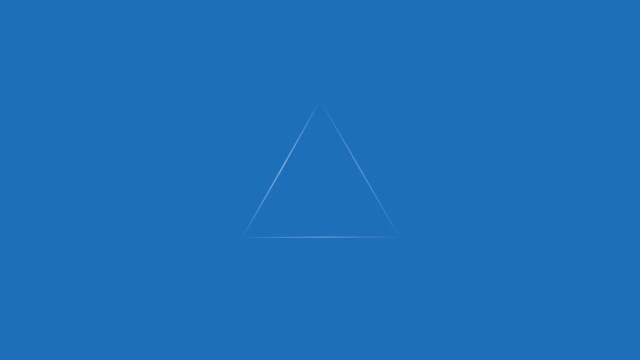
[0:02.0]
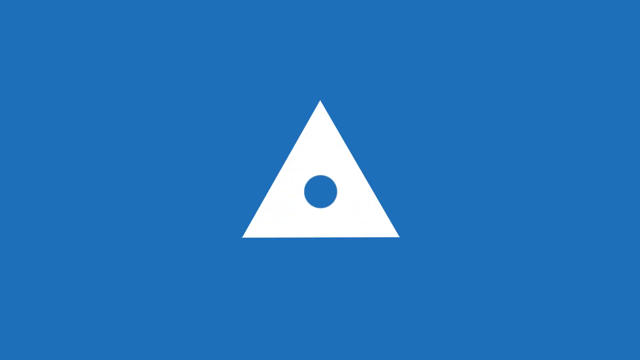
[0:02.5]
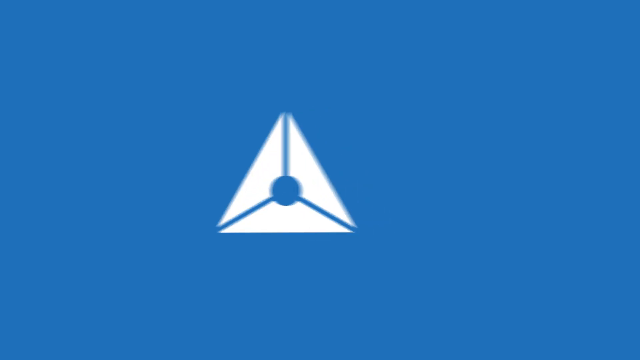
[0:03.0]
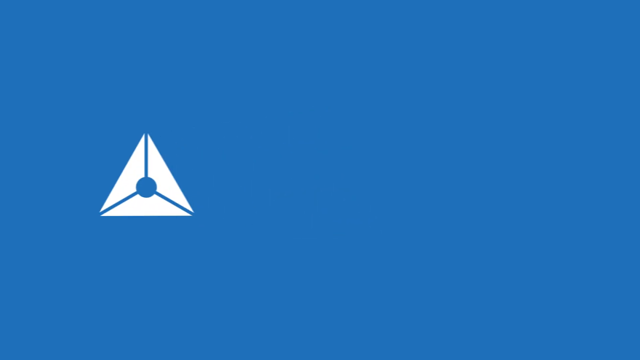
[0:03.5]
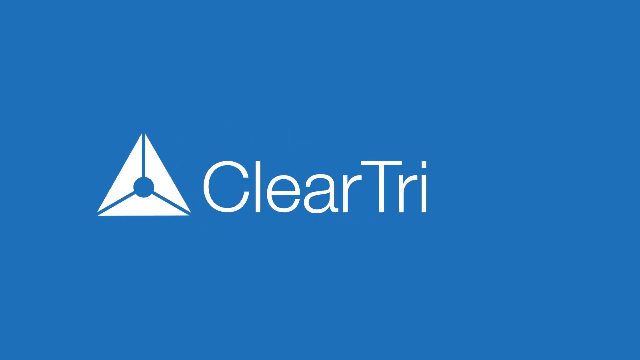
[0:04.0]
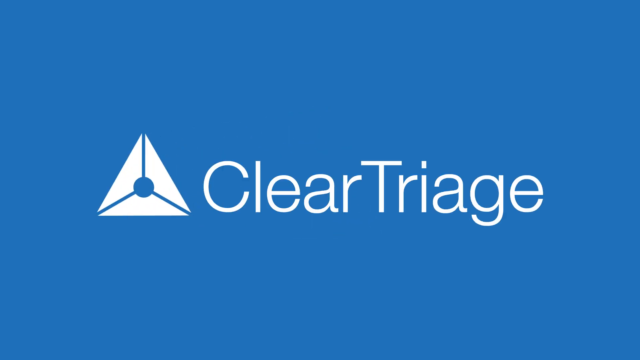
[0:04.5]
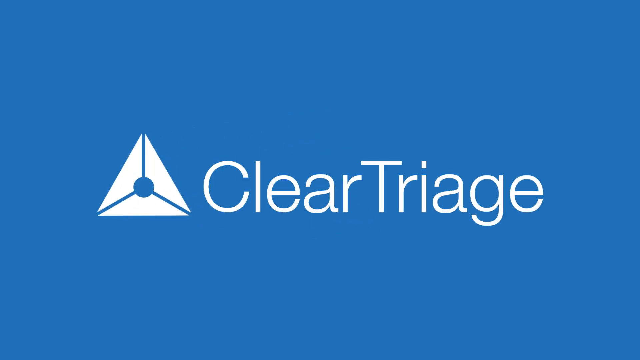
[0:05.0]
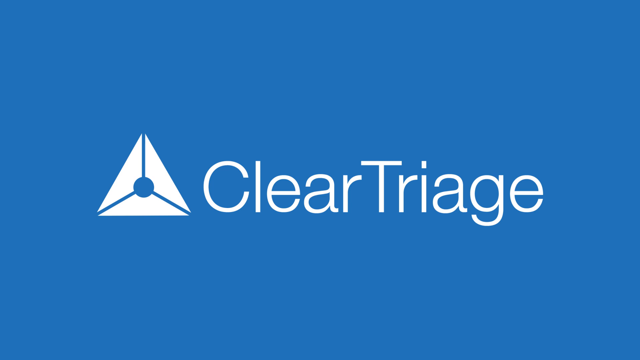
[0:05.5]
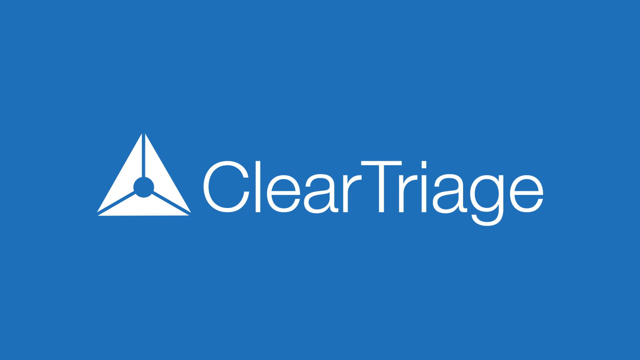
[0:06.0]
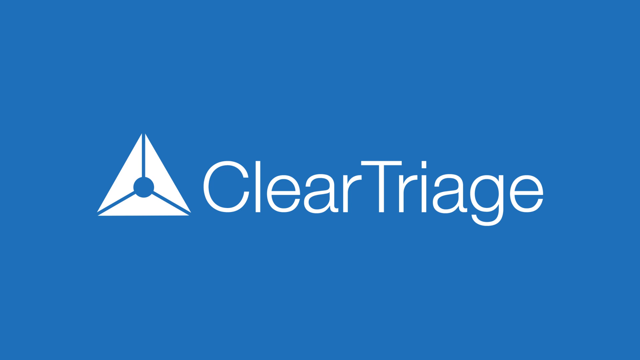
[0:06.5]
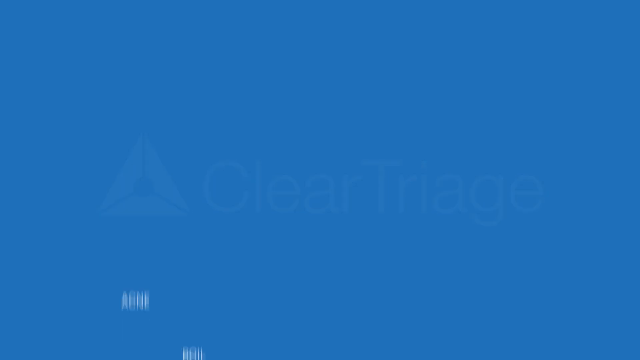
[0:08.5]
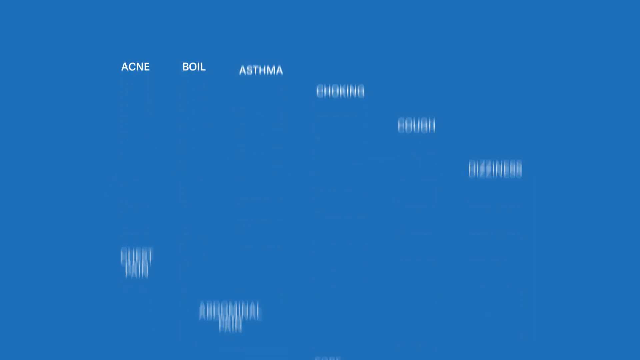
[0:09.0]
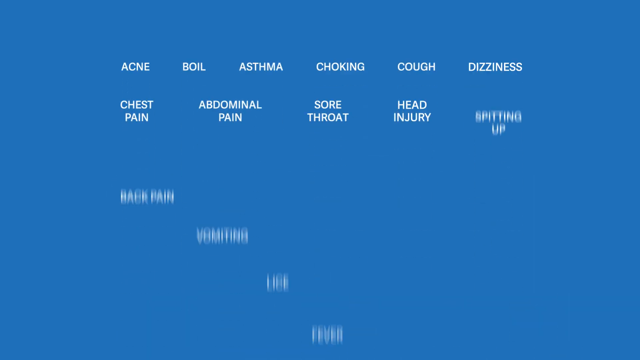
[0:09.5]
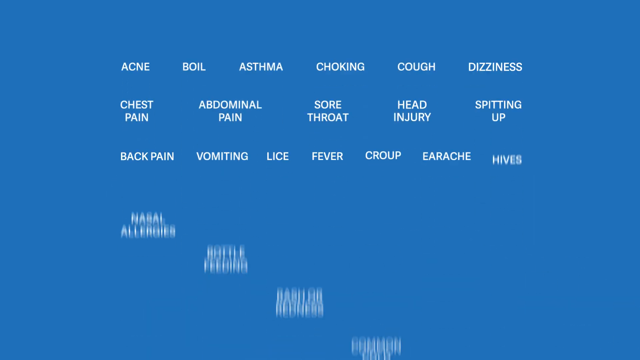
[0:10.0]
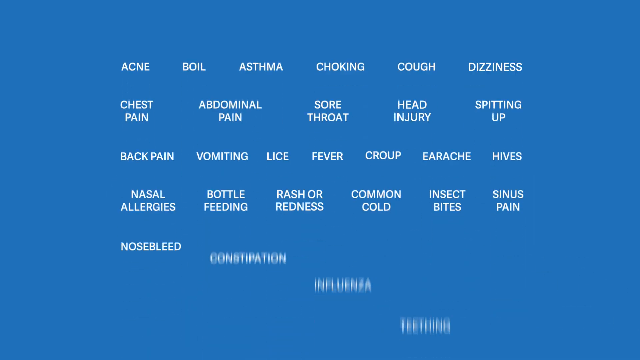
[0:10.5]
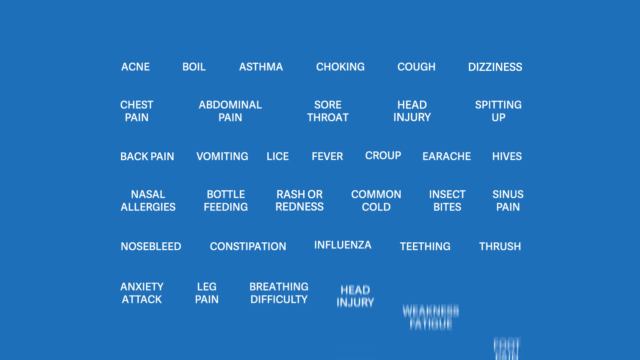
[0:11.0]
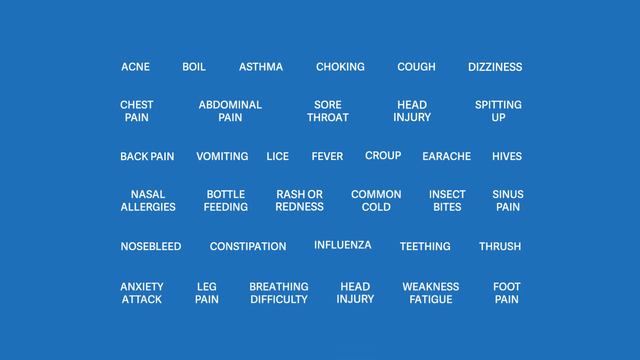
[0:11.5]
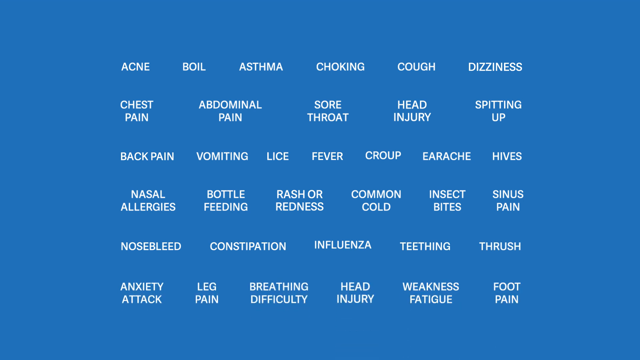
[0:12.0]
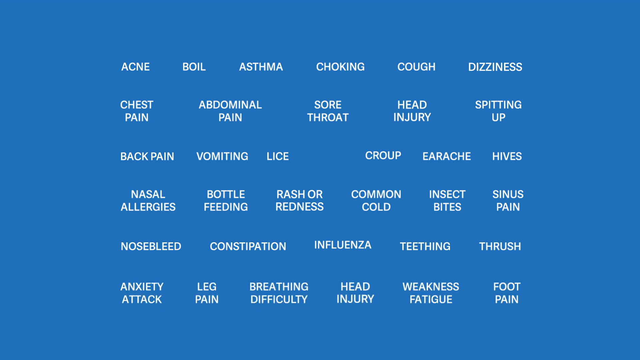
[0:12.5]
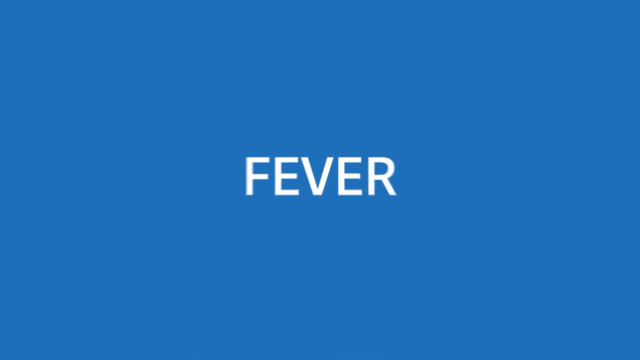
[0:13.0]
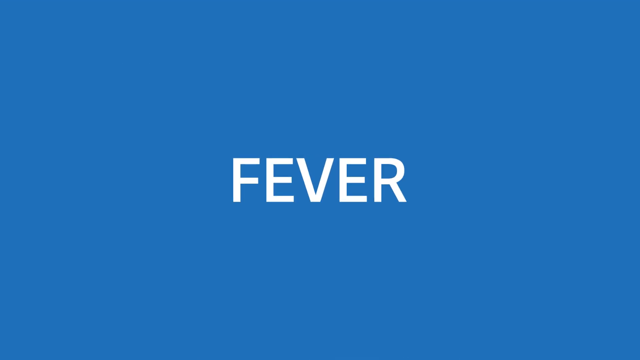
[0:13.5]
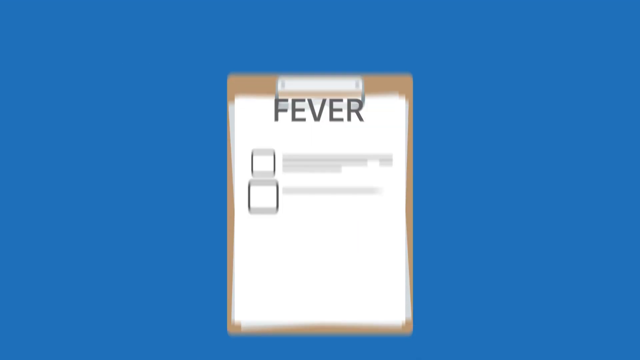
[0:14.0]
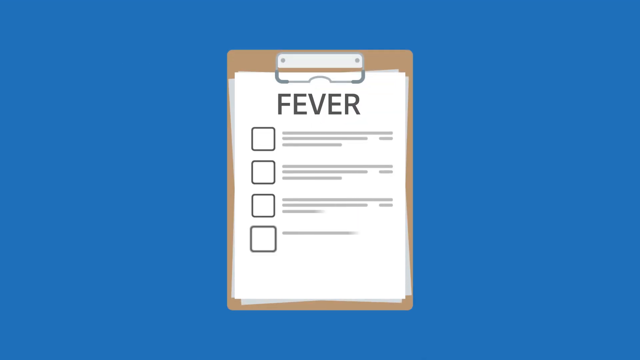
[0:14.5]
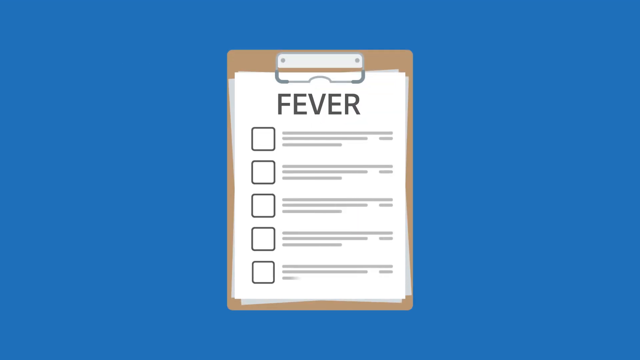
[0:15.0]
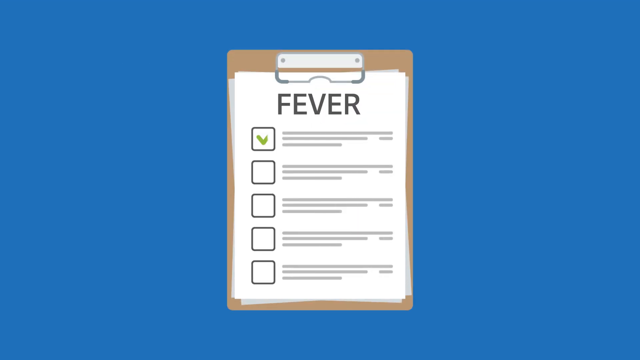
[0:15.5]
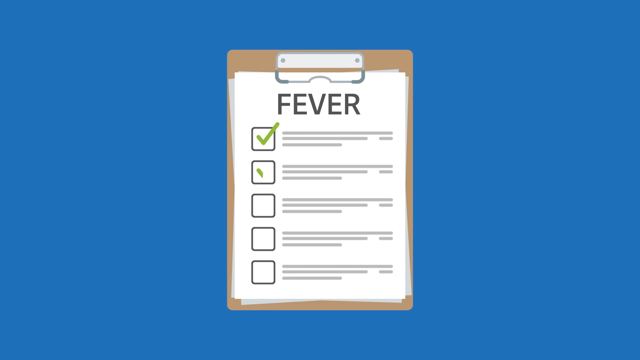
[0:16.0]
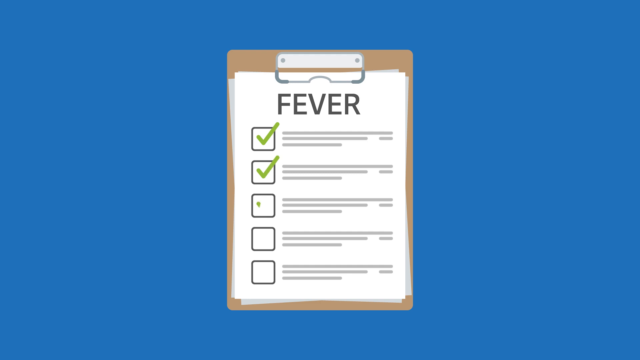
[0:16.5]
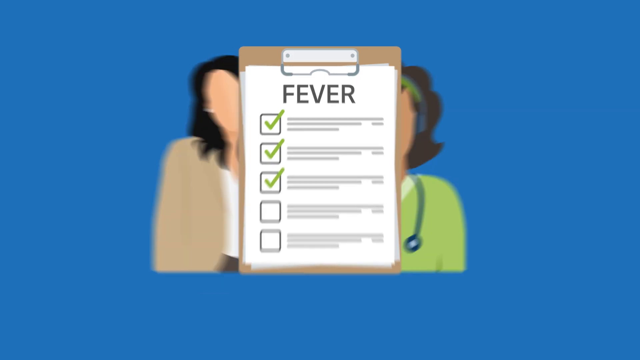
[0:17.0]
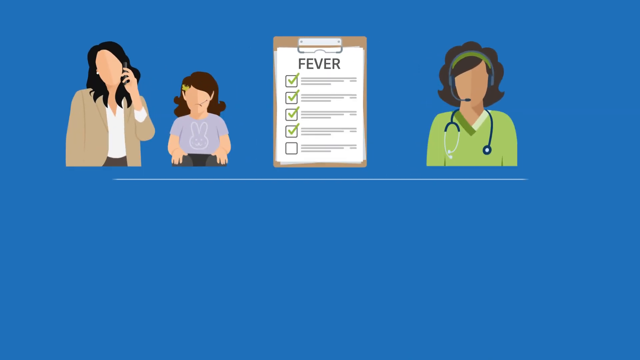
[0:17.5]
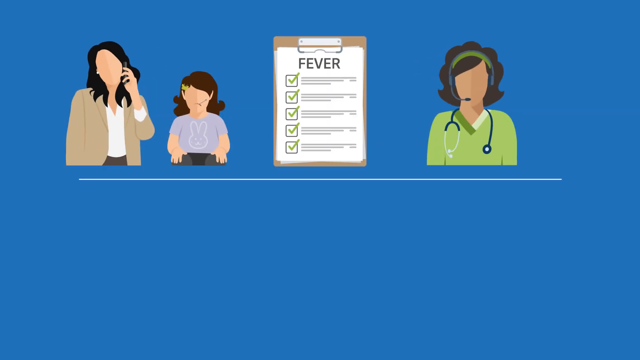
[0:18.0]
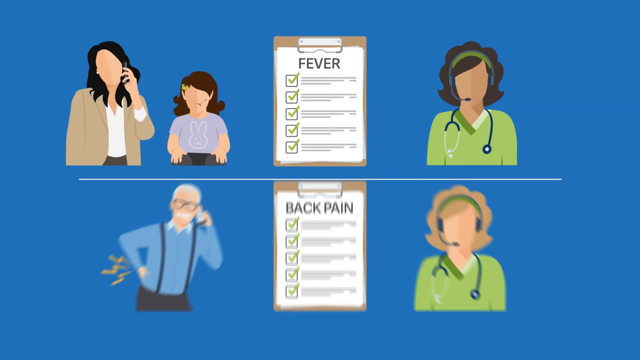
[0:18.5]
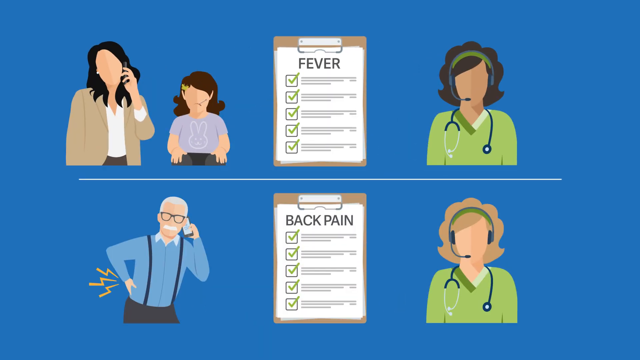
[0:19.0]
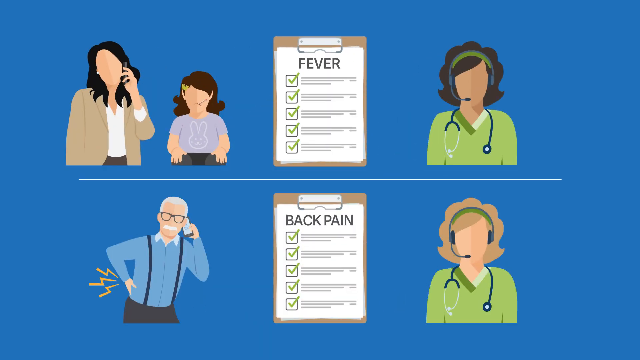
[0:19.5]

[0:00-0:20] A black screen turns blue, and a white triangle appears in the middle of the screen. The triangle has a blue circle in its center, with a blue line going toward each point of the triangle. The triangle moves to the left side of the screen, and the words "clear triage" appear in white letters to its right, with the C and the T capitalized. That disappears, and words come up from the bottom of the screen and form six rows, each with at least six words. The top row reads "acne boil asthma choking cough dizziness"; the second row reads "chest pain abdominal pain sore throat head injury spitting up"; the third row reads "back pain vomiting lice fever Croop earache hives"; the fourth row reads "nasal allergies bottle bleeding rash or Redness common cold insects bites sinus pain"; the fifth row reads "nosebleed constipation influenza teething thrush"; and the sixth row reads "anxiety attack leg pain breathing difficulty head injury weakness fatigue foot pain". That disappears, and the word "FEVER" appears in white capital letters. The word turns black and goes onto a piece of paper on a clipboard, which has five squares on its left side. A green checkmark appears in all five squares. Drawings of two women then appear on the left side and a drawing of a woman on the right side. The clipboard duplicates, showing a man on the left side of the screen and a woman on the right side.